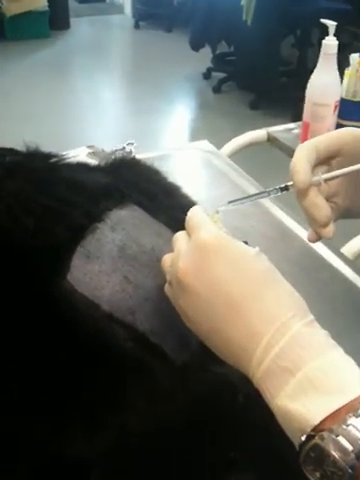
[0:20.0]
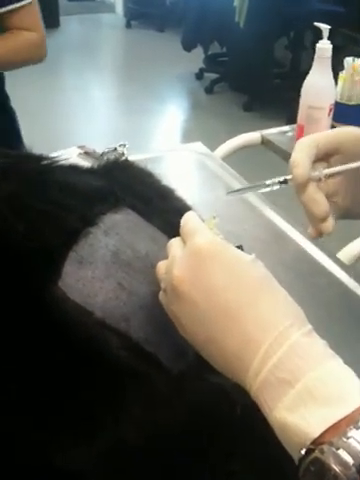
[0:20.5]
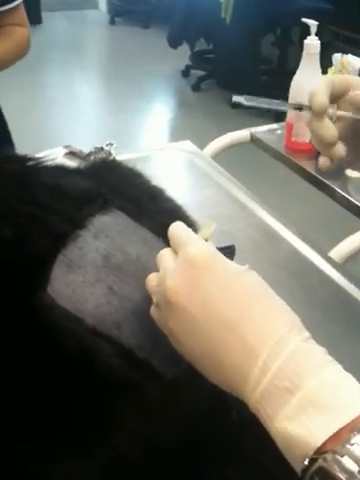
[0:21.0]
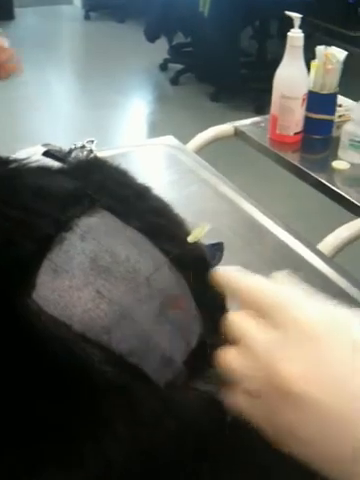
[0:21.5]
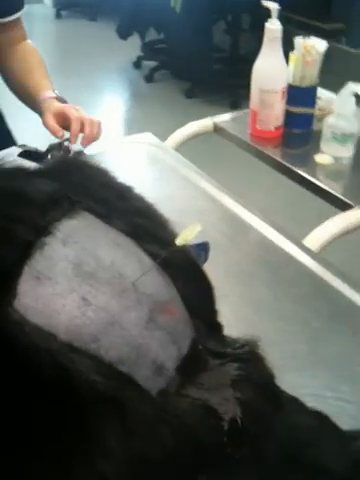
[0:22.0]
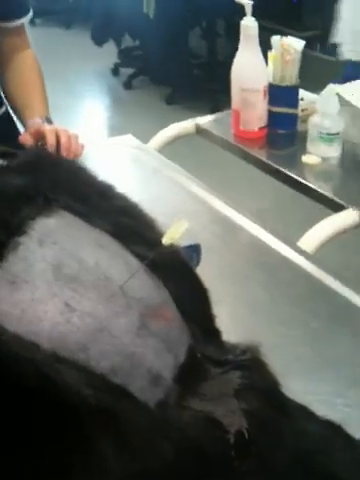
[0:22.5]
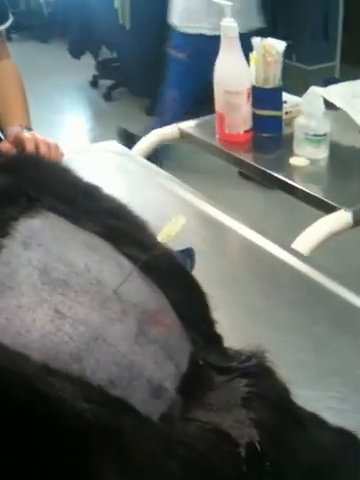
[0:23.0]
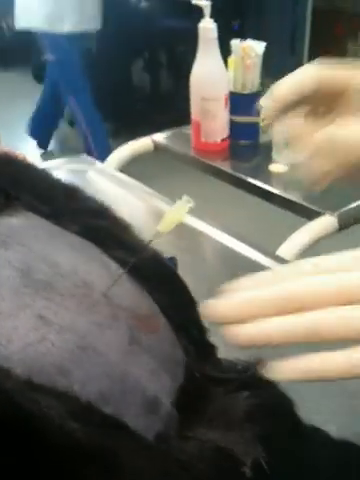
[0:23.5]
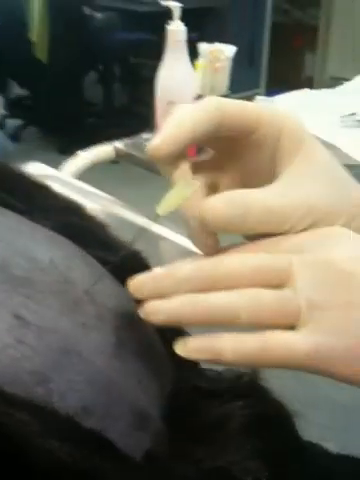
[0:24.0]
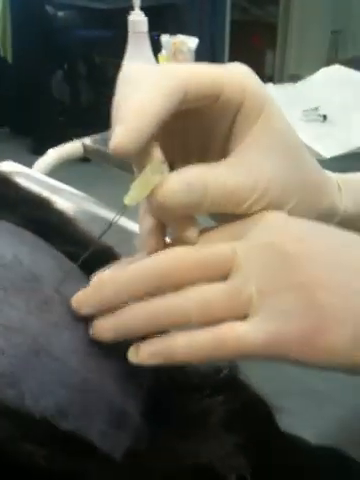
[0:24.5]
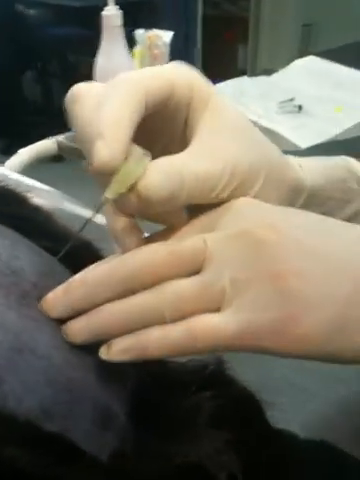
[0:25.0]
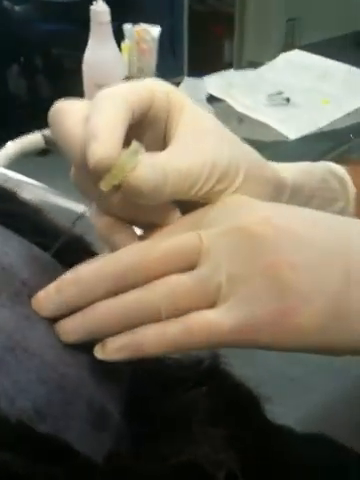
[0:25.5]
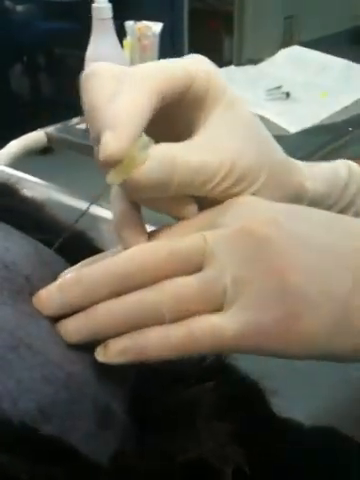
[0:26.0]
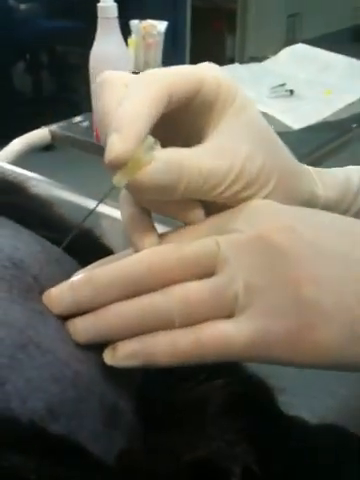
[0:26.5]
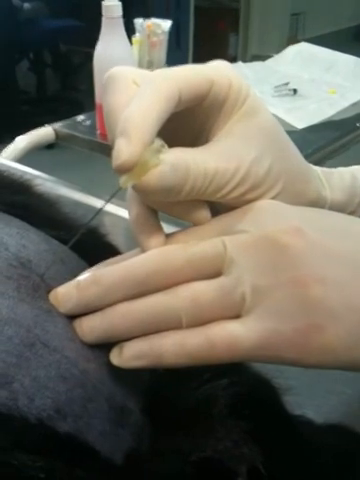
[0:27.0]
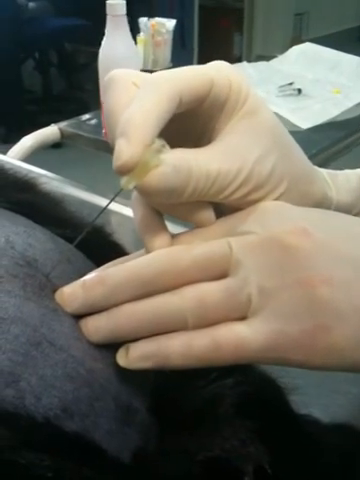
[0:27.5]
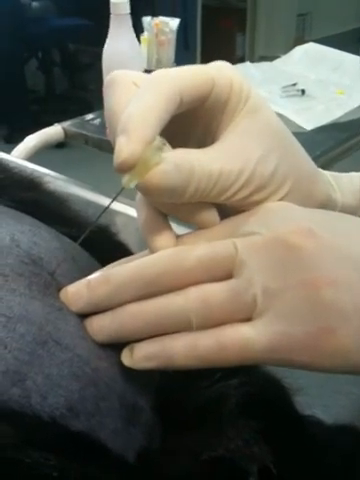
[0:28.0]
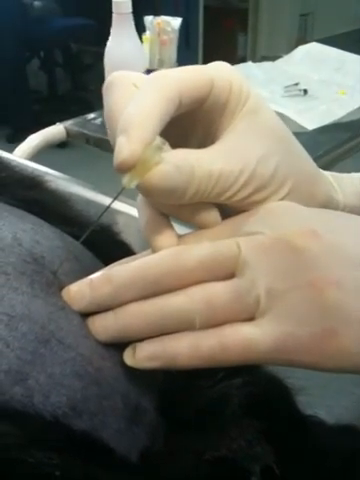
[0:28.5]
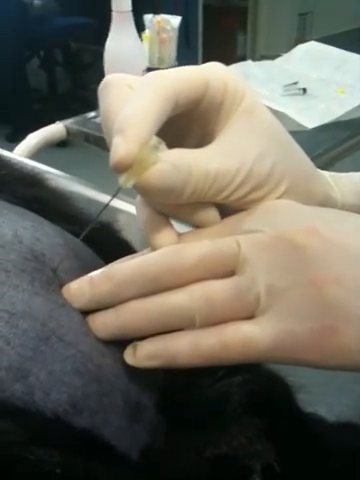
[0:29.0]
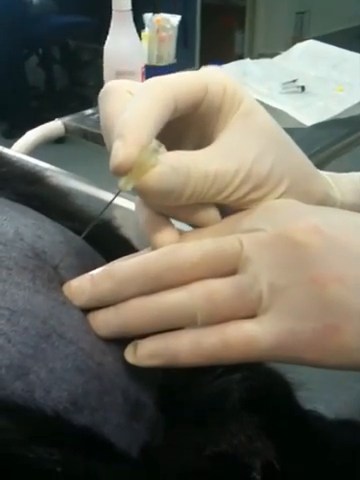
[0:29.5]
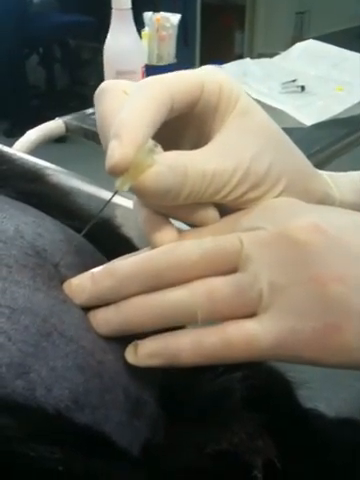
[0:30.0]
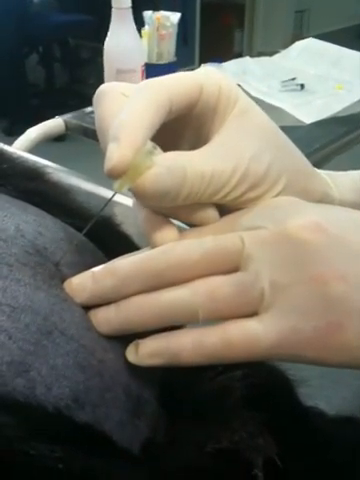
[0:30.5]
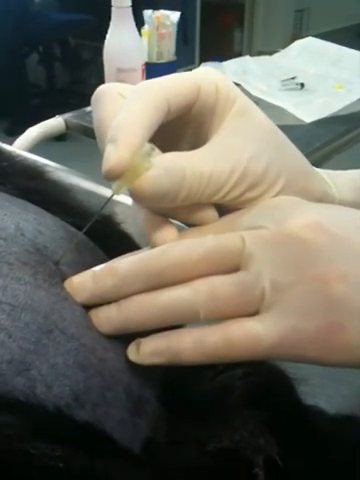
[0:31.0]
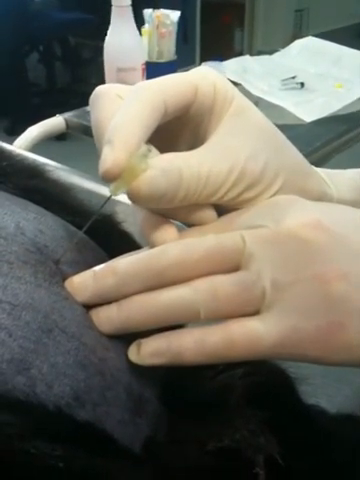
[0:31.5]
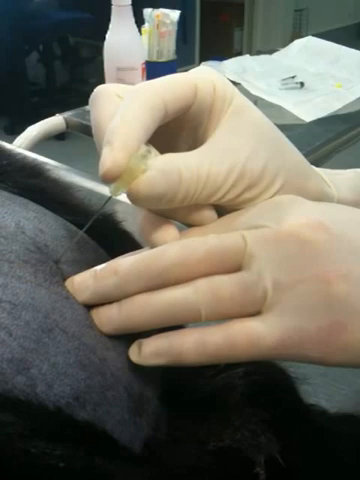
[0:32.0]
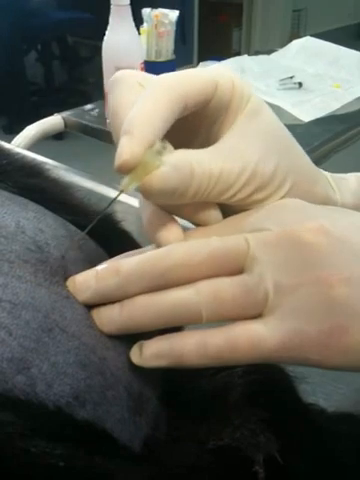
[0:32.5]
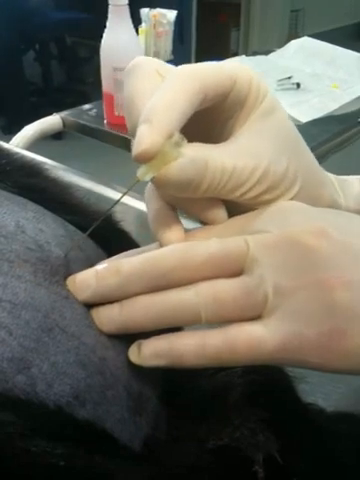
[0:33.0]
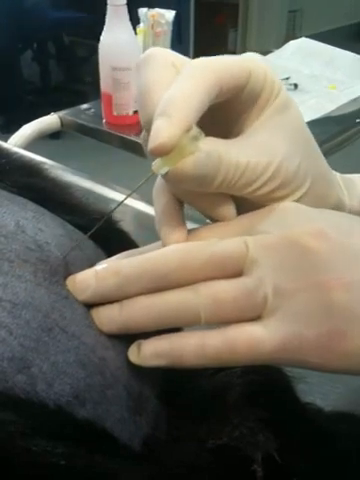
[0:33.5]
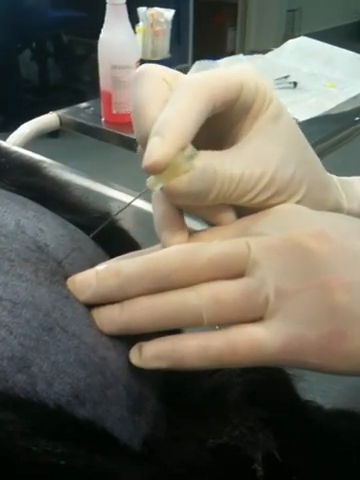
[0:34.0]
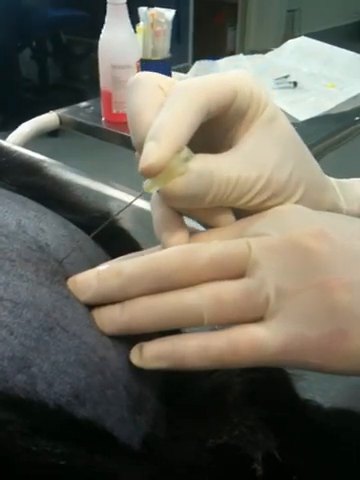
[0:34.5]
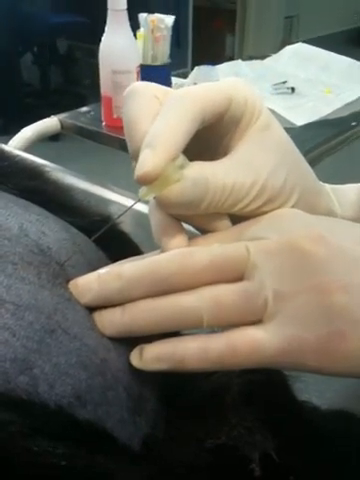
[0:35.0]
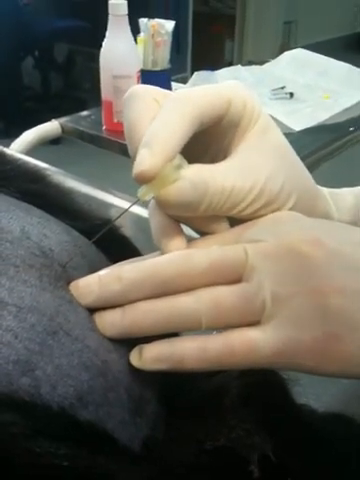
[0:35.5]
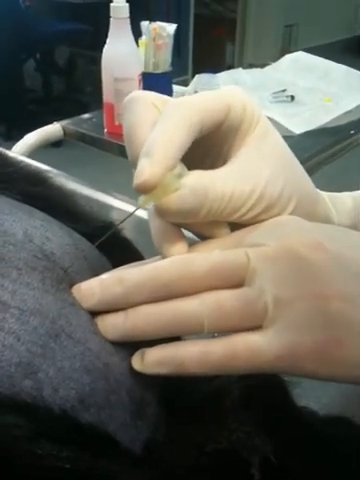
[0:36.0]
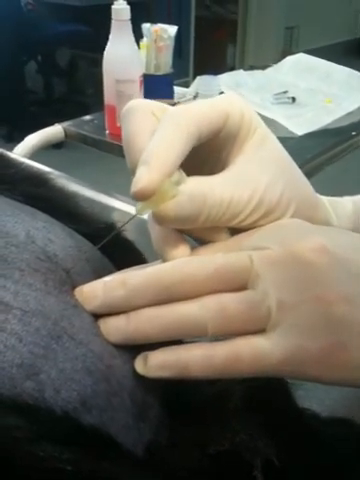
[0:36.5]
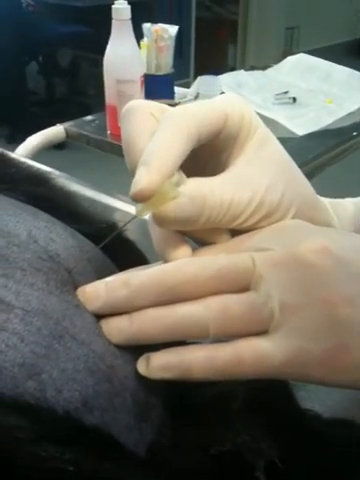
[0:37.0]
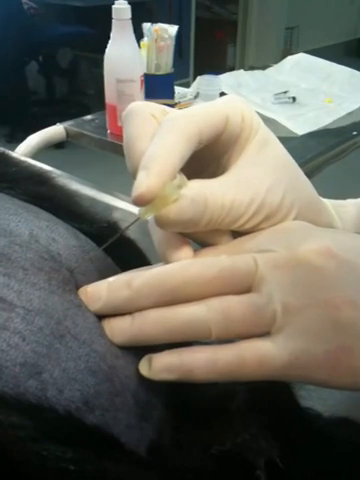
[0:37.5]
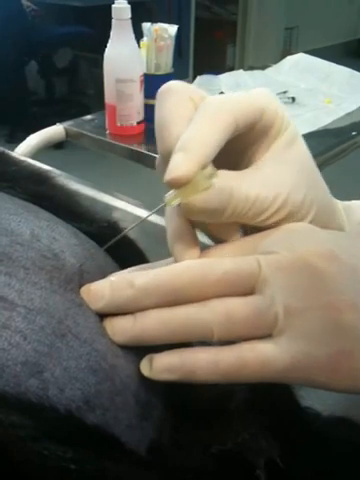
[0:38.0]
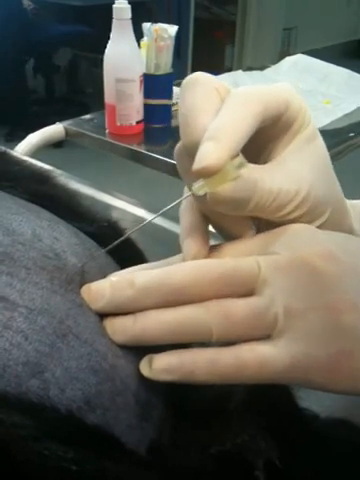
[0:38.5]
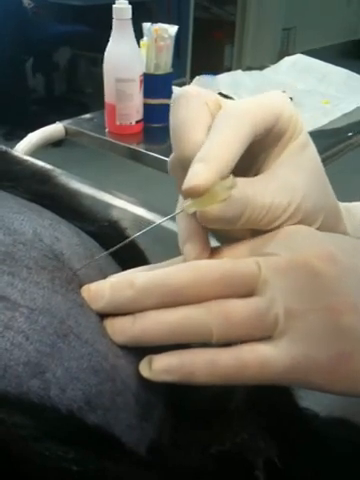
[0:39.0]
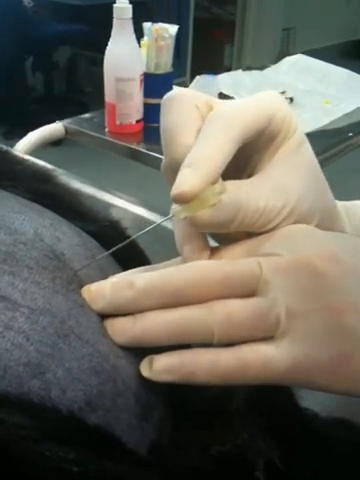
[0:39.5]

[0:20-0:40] A close-up shows a procedure on what is possibly a black dog lying on a veterinary table, with a number of staff working near it. The vet's gloved hands have already inserted a tube or needle into the rear side of the dog within a shaved rectangle, and what looks like a catheter is now attached to the end of the wire or tube. Another member of veterinary staff in jeans and a white jacket walks towards the rear of the room. The vet's hands return to the needle or tube, which now has a plastic top added. Using the right hand, the vet rotates the tube or needle and inserts it deeper into the skin, retracts it, inserts it deeper, retracts it, and then inserts it once more.